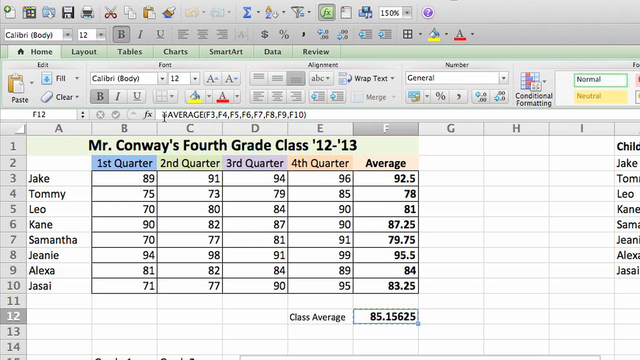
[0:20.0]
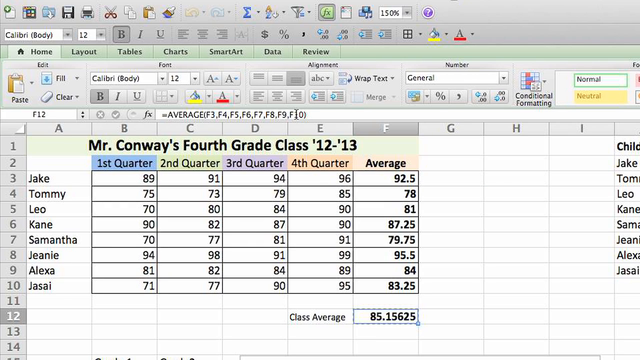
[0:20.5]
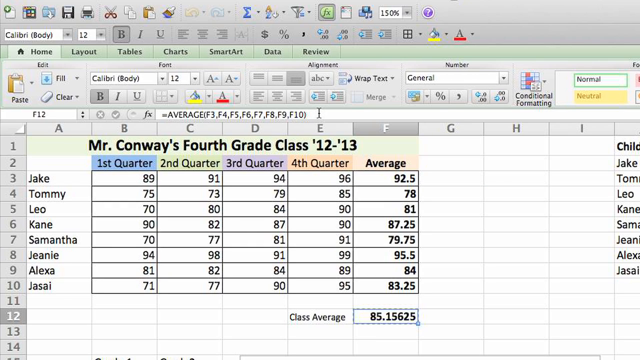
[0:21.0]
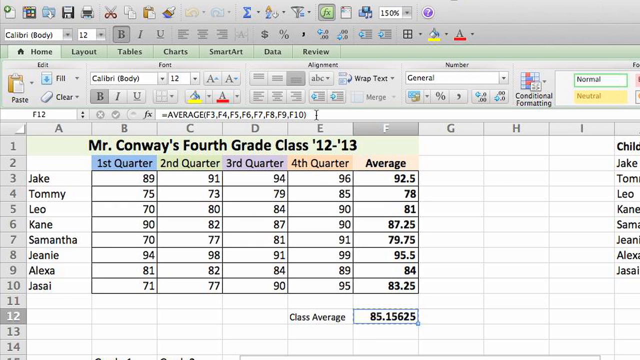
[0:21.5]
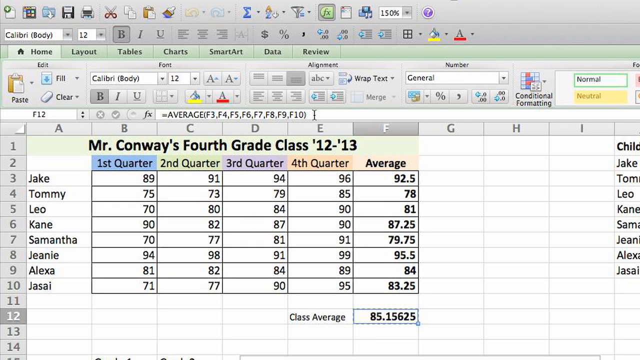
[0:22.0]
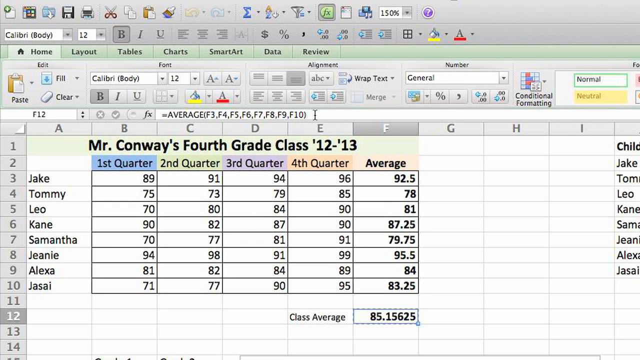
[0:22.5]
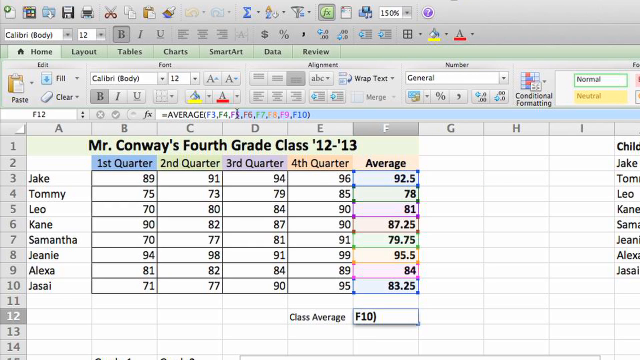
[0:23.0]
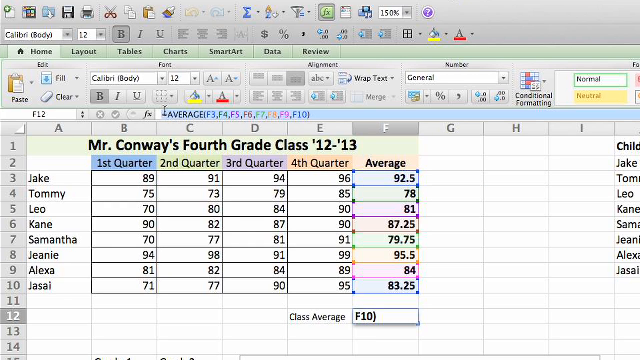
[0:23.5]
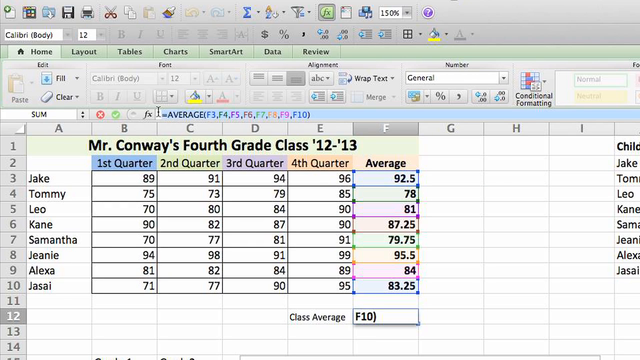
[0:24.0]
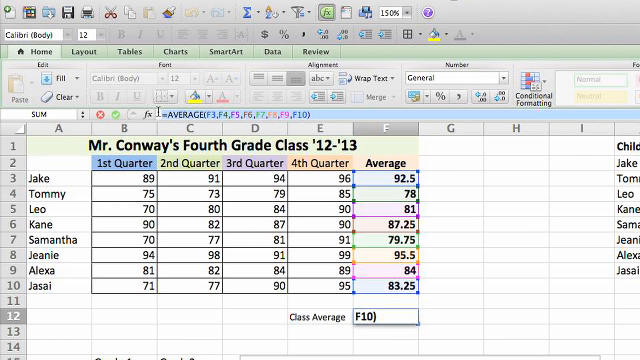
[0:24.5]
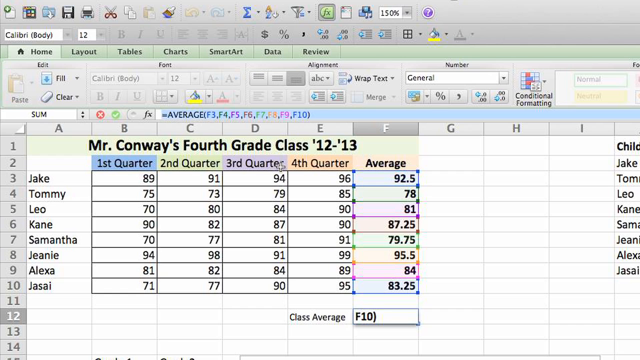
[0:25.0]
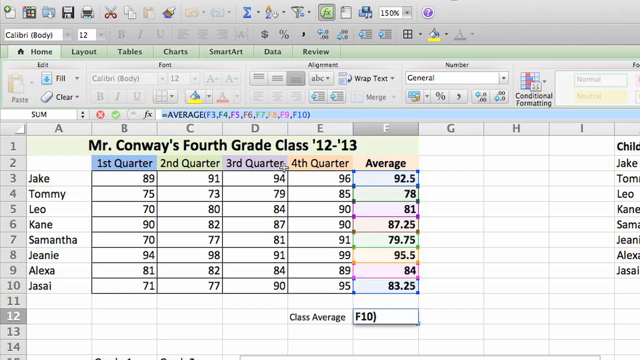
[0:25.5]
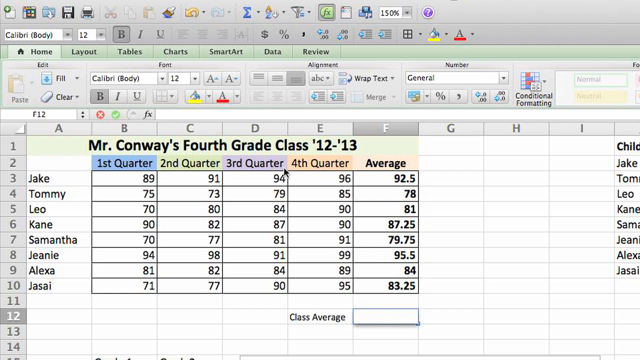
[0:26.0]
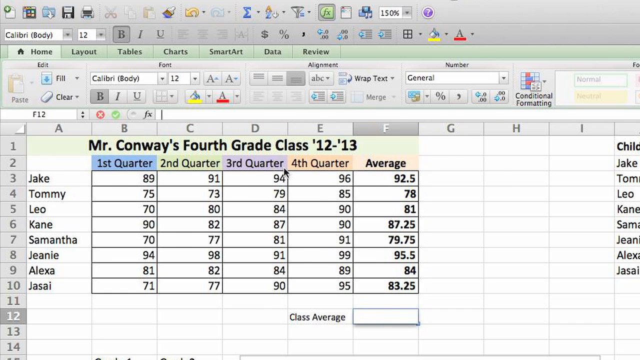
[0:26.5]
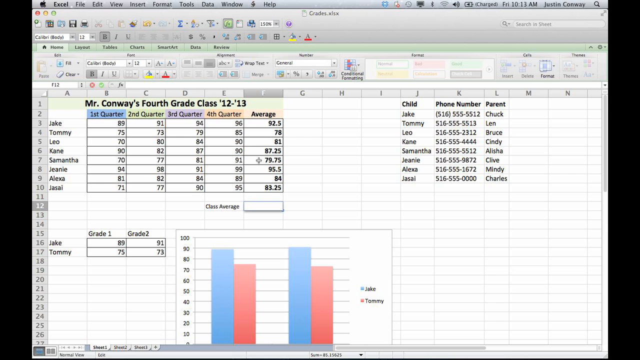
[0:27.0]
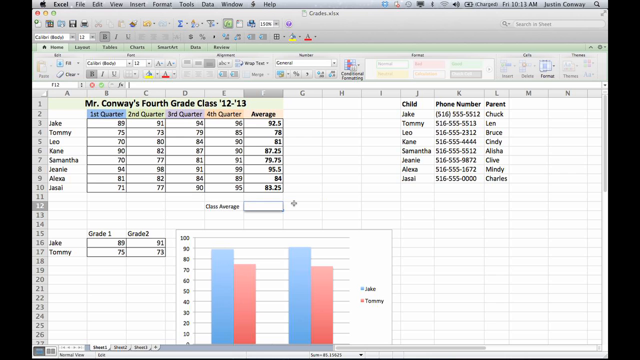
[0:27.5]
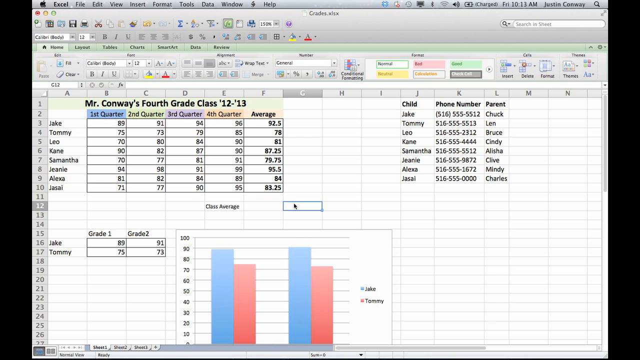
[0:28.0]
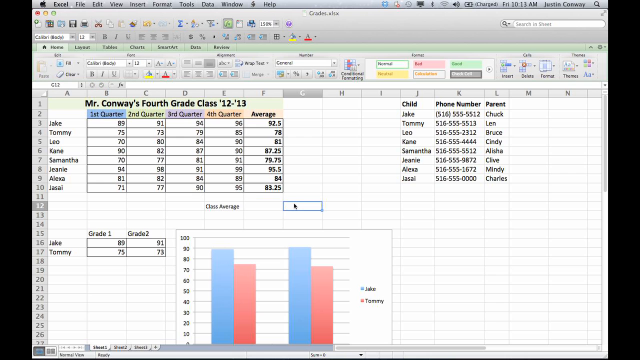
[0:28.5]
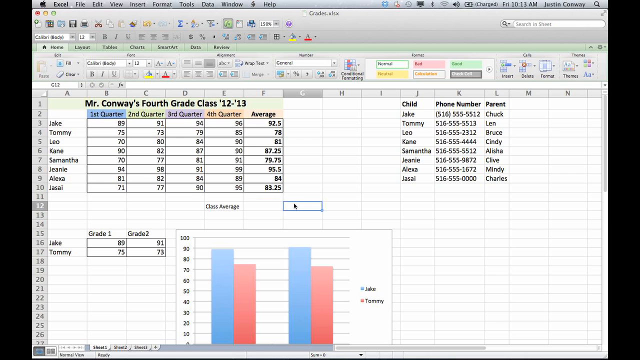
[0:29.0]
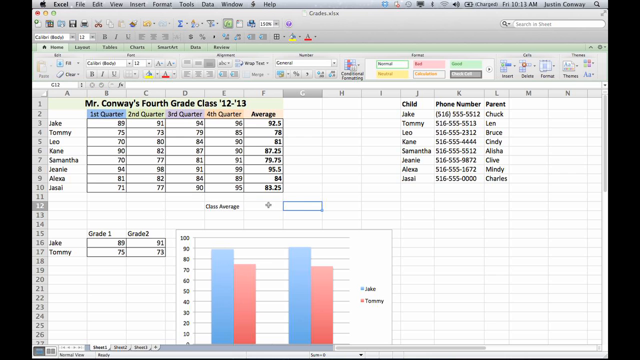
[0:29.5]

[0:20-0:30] The table and graph show different numbers. Alongside the quarter labels and the average, the table has labels for child, phone numbers and parent: the child column lists the children's names, the phone numbers are listed as numbers, and the parent column lists the name of each child's parent. The numbers in the table are all different, and there is a class average.